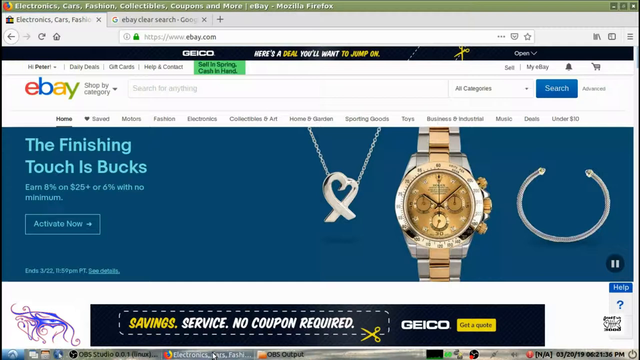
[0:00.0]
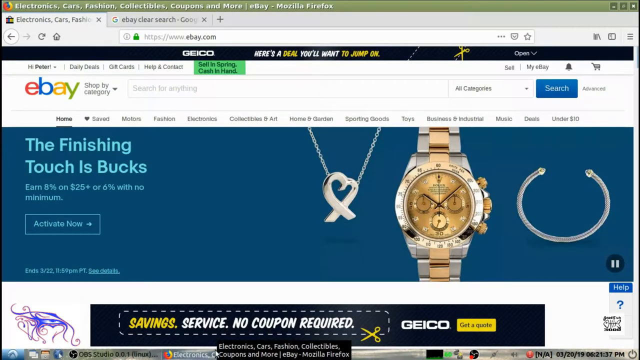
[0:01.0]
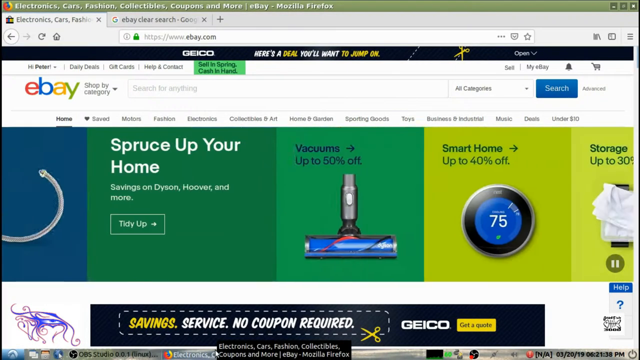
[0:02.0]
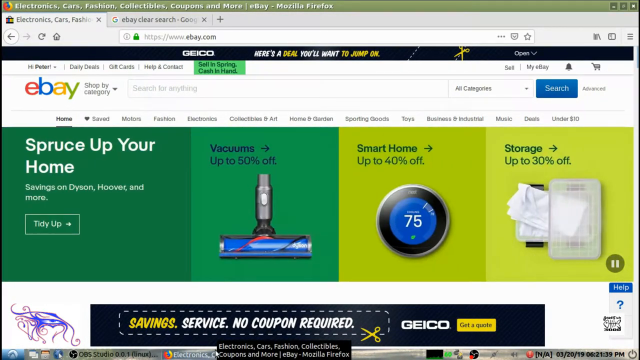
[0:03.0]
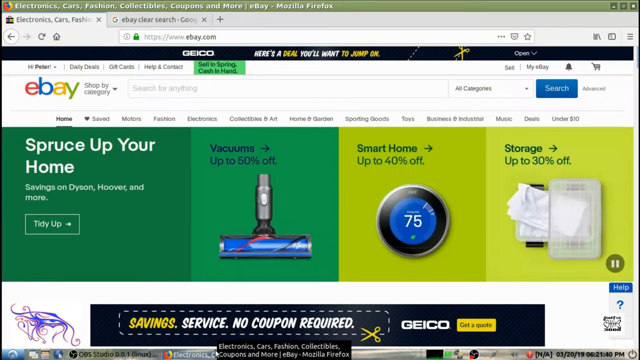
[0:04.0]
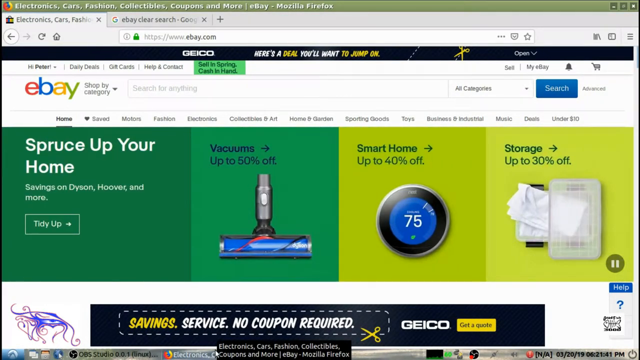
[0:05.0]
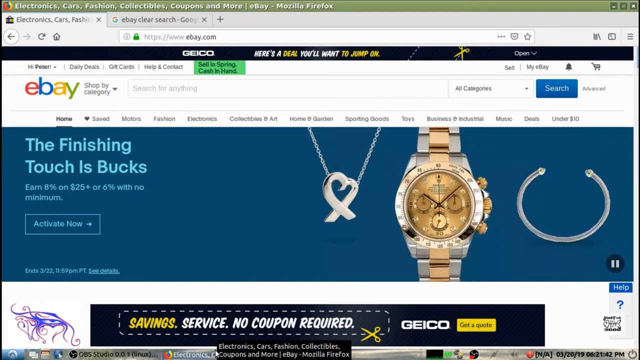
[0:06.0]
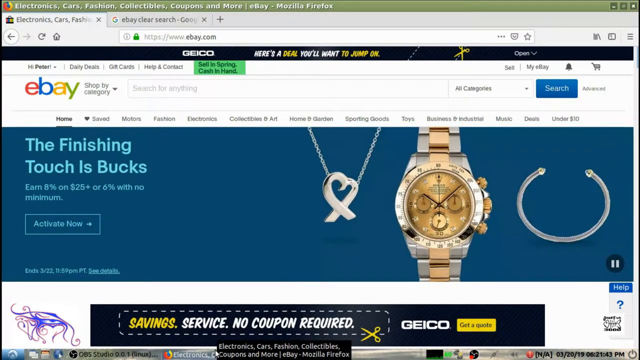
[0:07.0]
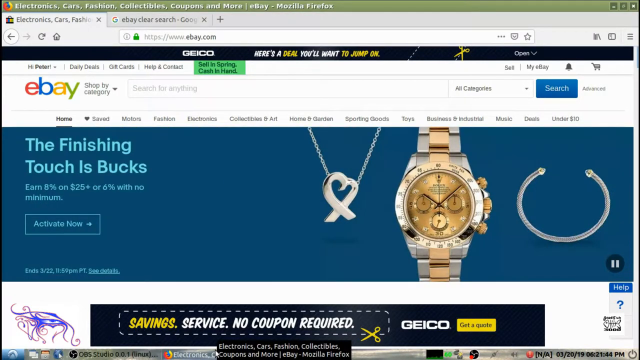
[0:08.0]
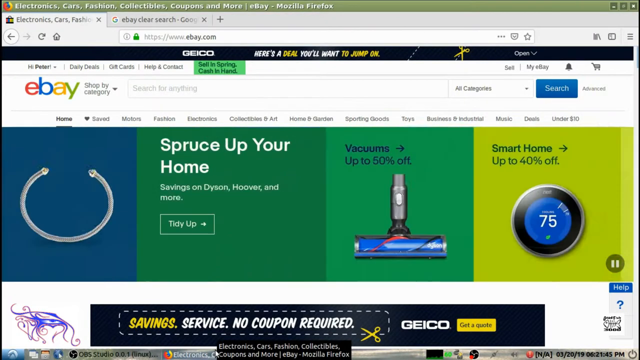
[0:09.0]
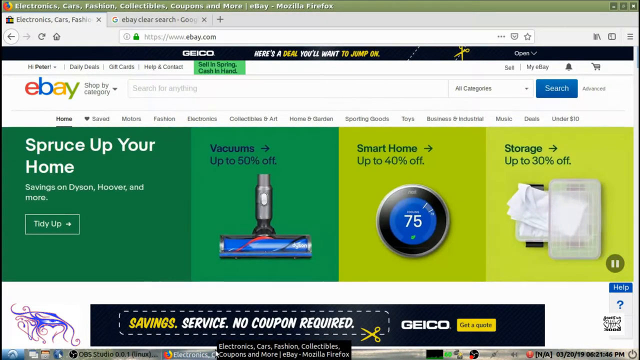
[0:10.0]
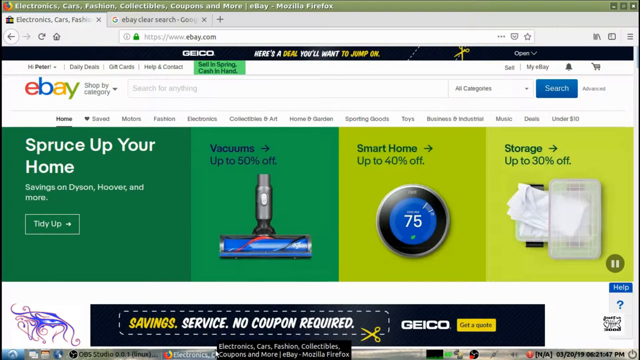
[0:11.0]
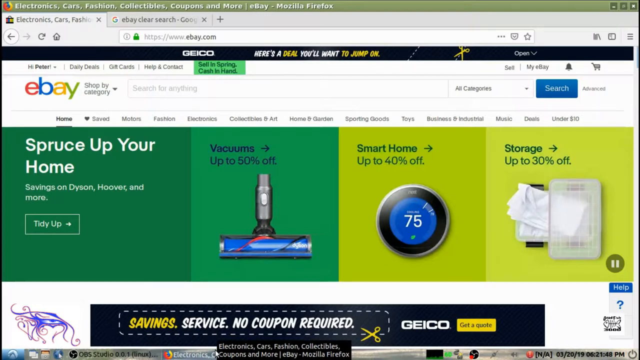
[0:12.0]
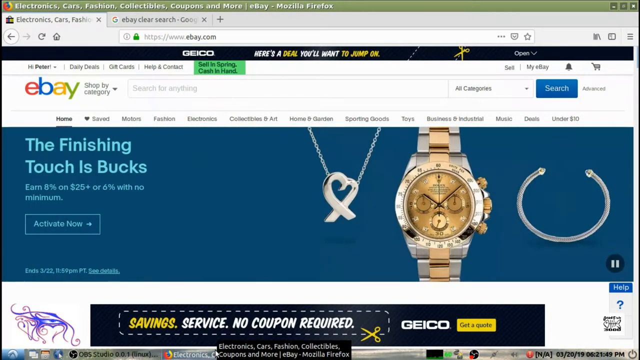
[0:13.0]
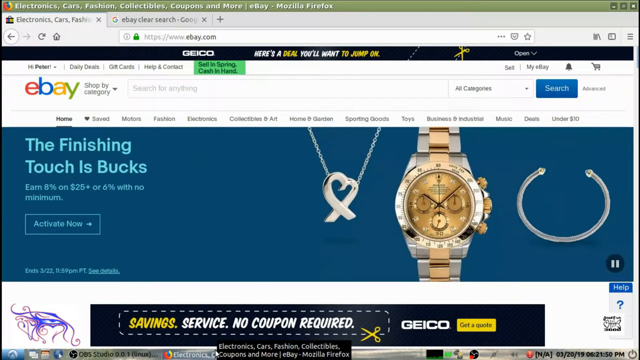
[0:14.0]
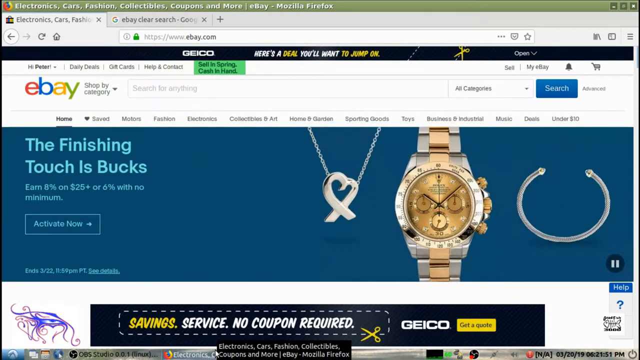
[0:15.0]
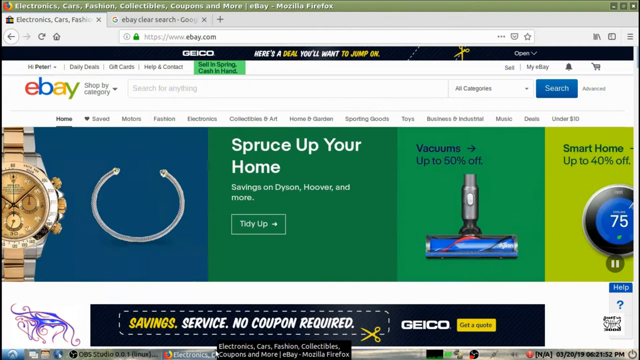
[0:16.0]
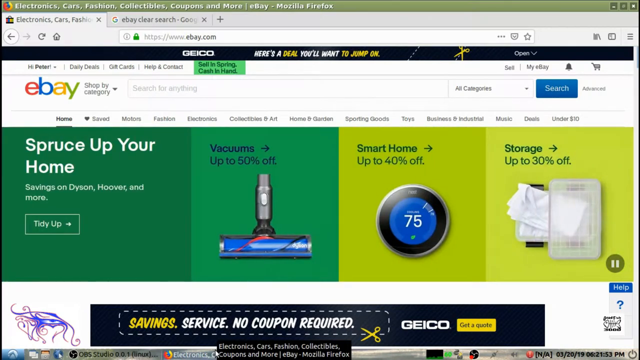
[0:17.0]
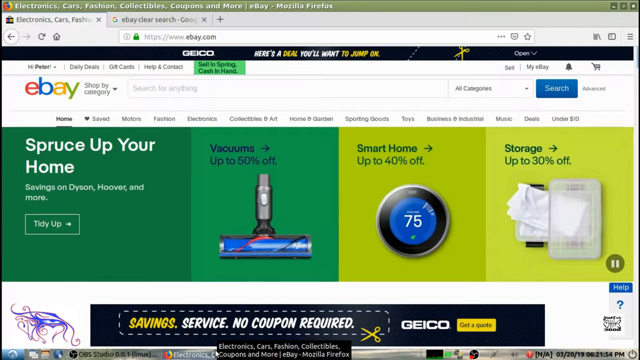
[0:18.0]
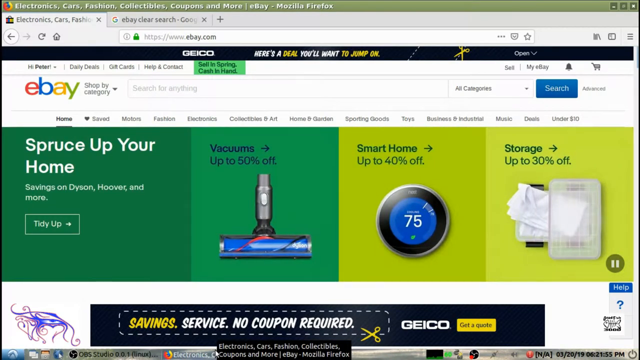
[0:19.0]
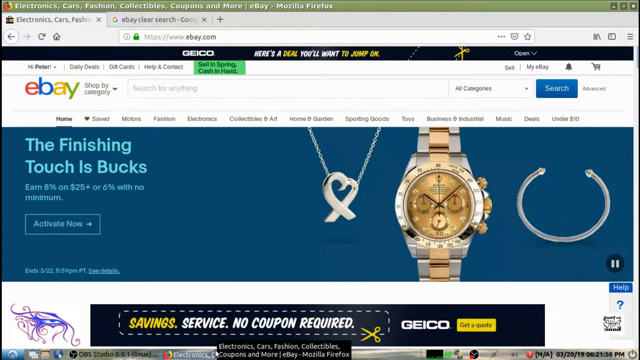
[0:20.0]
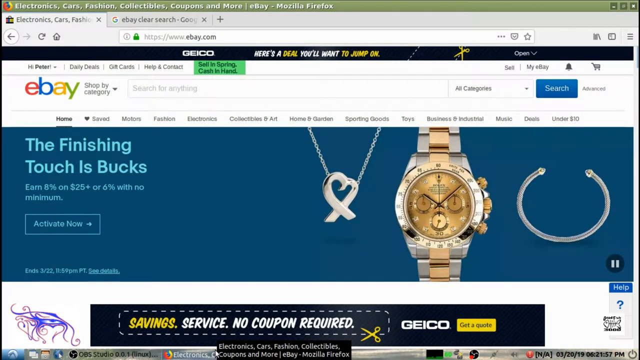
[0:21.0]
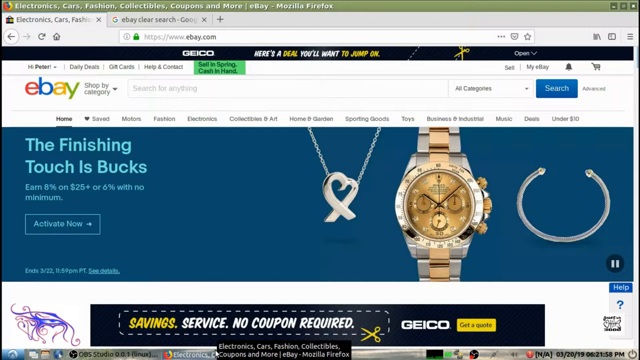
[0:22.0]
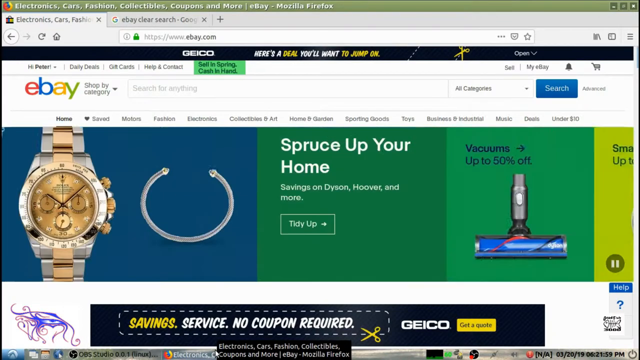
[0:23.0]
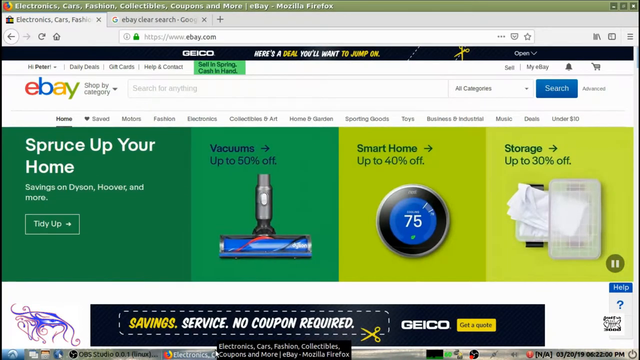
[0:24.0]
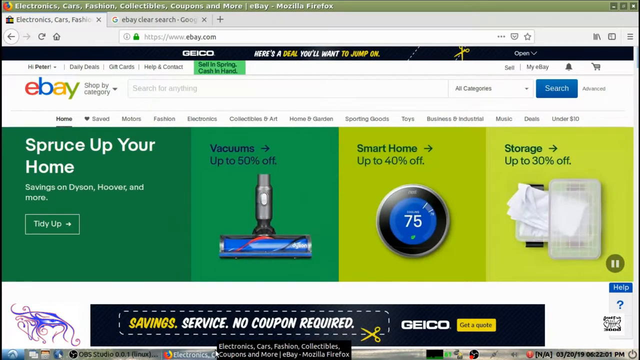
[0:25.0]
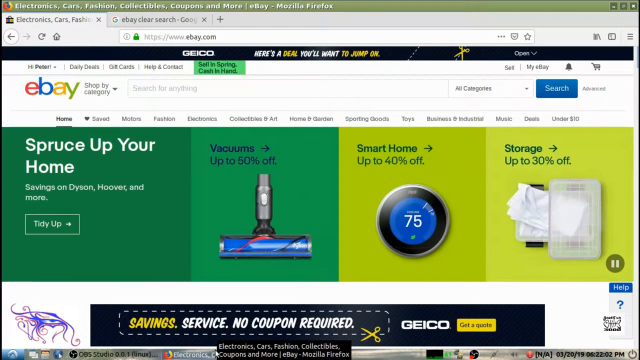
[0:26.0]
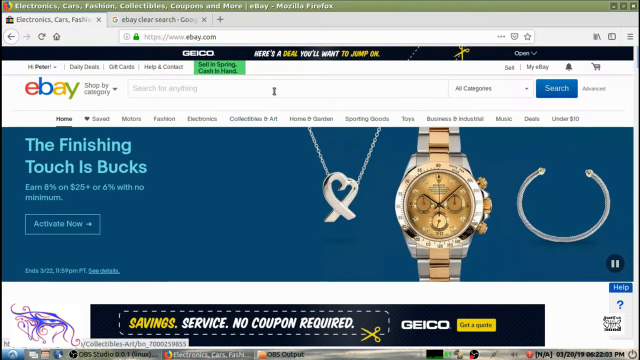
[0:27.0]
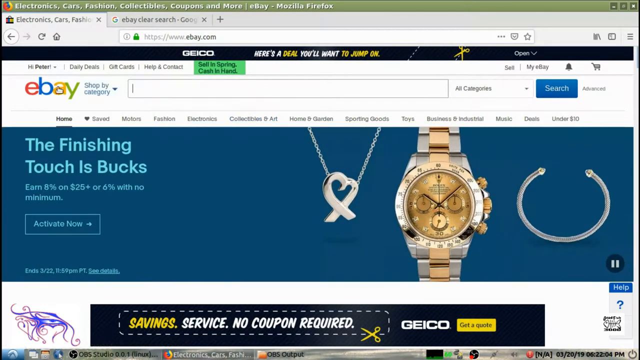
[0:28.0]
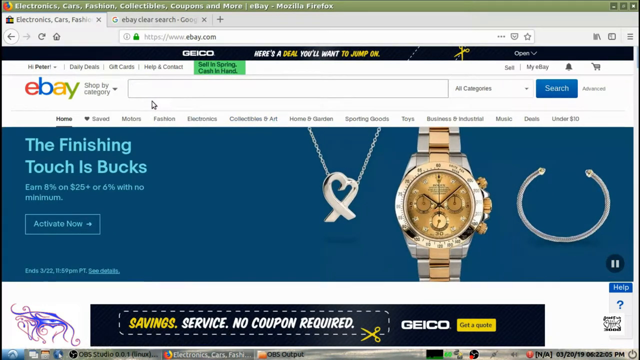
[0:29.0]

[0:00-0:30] A webpage is open to the eBay site in a Firefox browser, with the Firefox symbol in the upper left area. Two tabs are open: the first is eBay's front page, which is on screen, and the second is a Google search. On the front page, a watch appears on the right side; it has a silver band and a light golden colored face and appears to be a Rolex. To the left is a necklace with a heart-shaped silver pendant, and to the right side there is a silver bracelet. The images change to show a vacuum cleaner on the left side, a smart thermostat in the middle, and some plastic storage containers on the right. The pictures on top then change again, showing the same images of the watch, the heart pendant necklace to the left and the silver bracelet to the right. At the bottom of the page is a Geico advertisement that says "savings service no coupon required." Another very thin Geico ad appears on top, below the website's URL, and says "here's a deal you'll want to jump on."